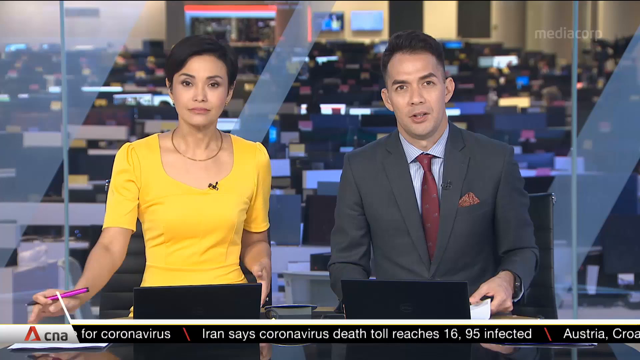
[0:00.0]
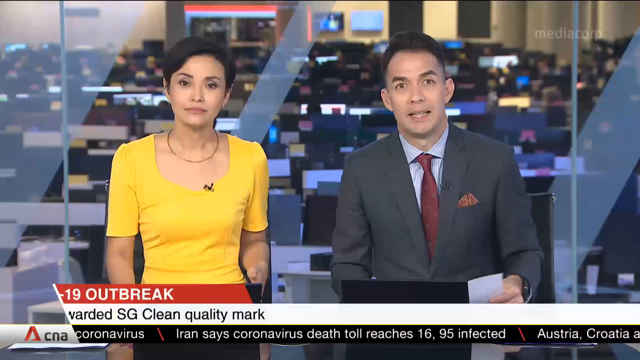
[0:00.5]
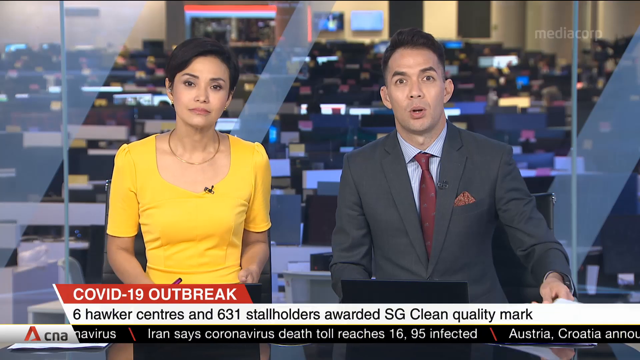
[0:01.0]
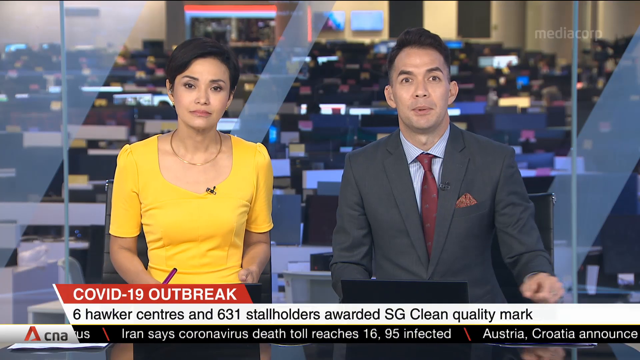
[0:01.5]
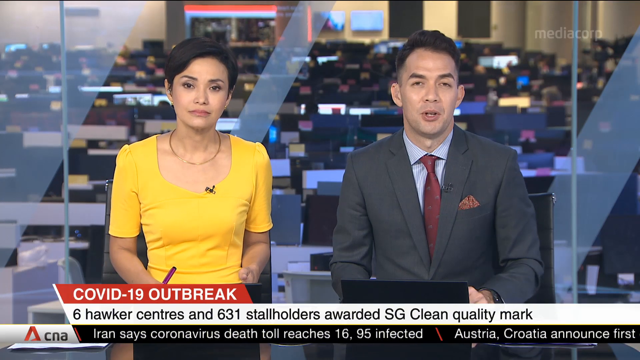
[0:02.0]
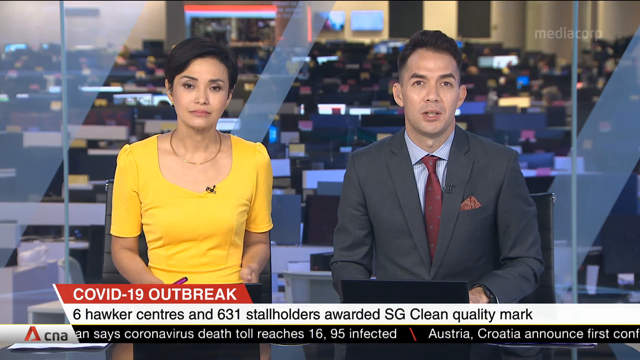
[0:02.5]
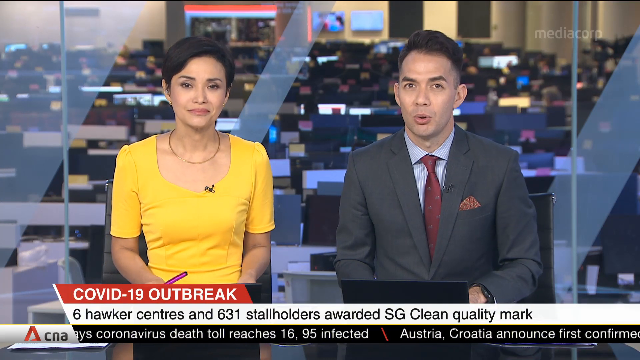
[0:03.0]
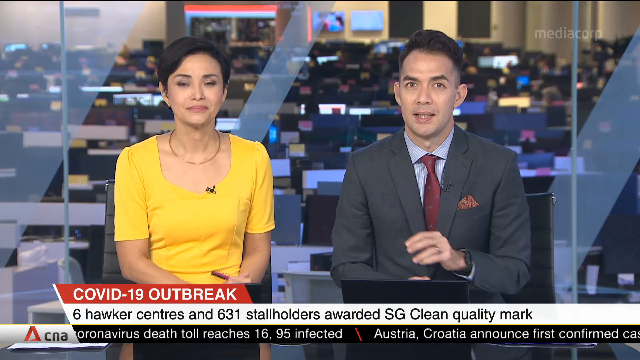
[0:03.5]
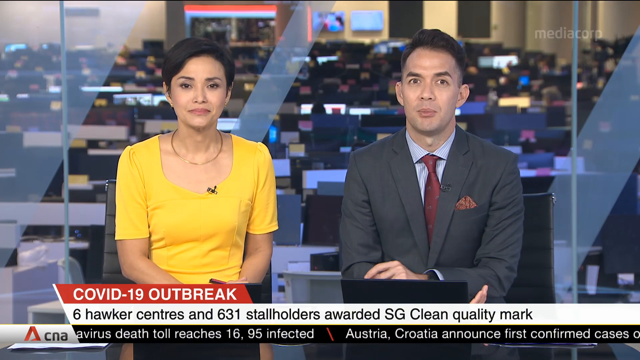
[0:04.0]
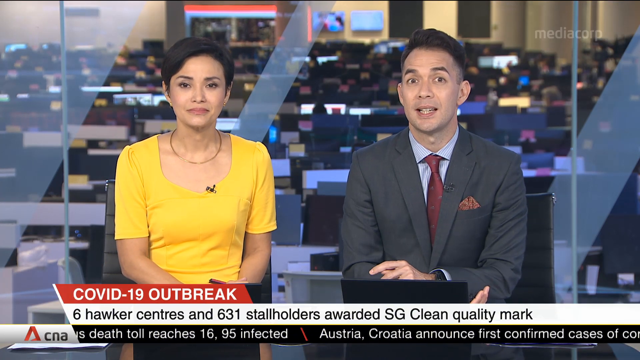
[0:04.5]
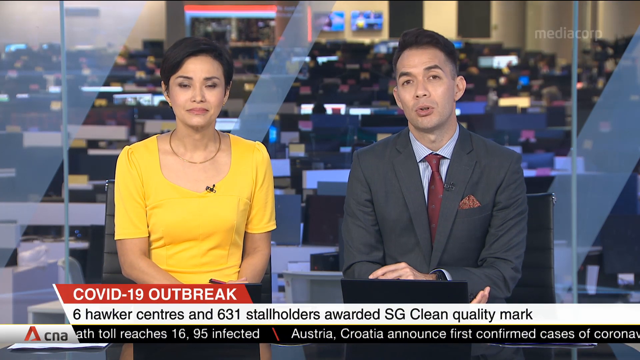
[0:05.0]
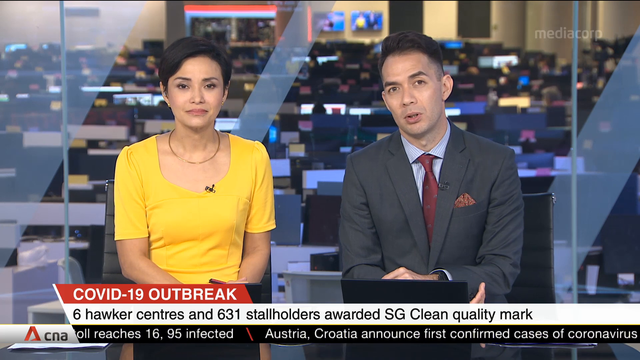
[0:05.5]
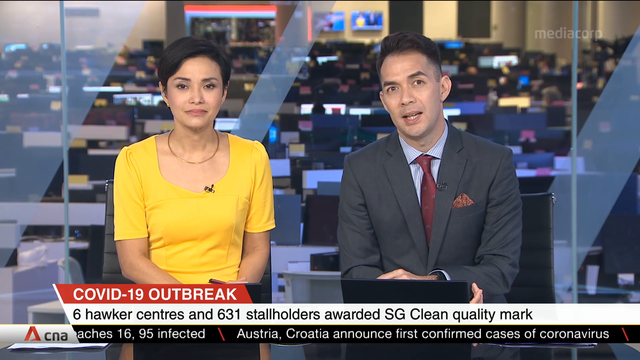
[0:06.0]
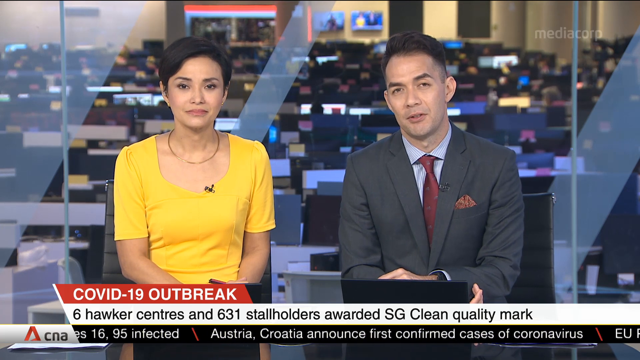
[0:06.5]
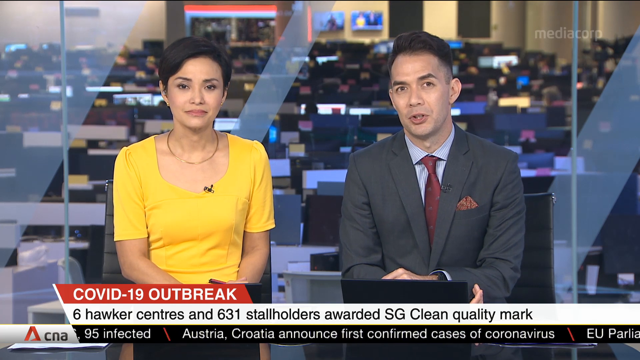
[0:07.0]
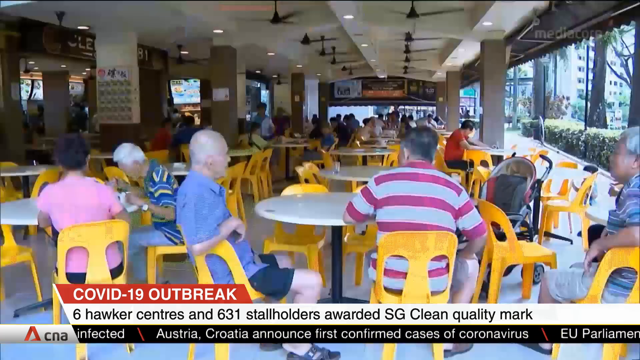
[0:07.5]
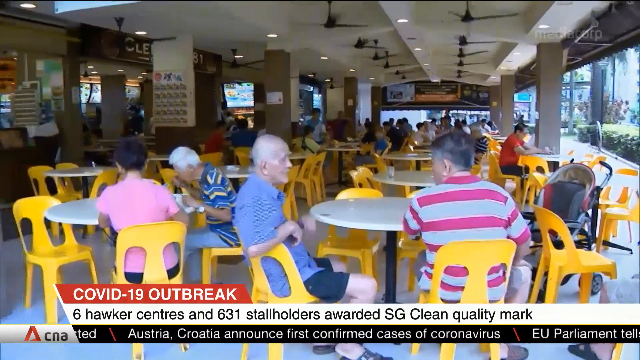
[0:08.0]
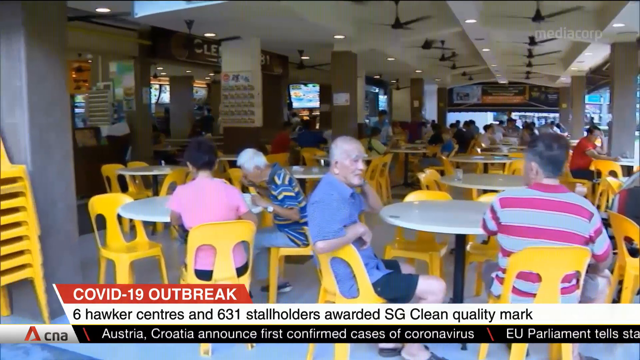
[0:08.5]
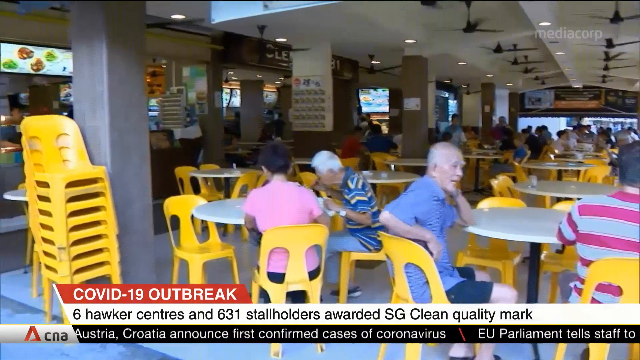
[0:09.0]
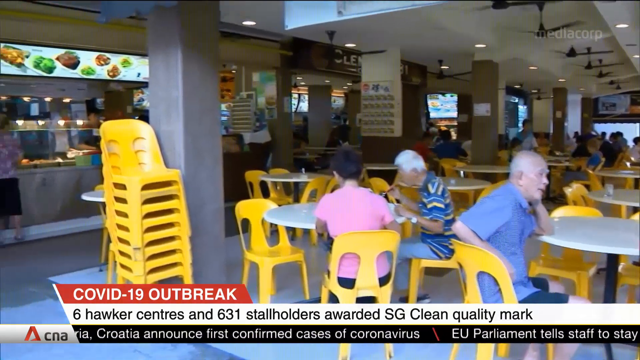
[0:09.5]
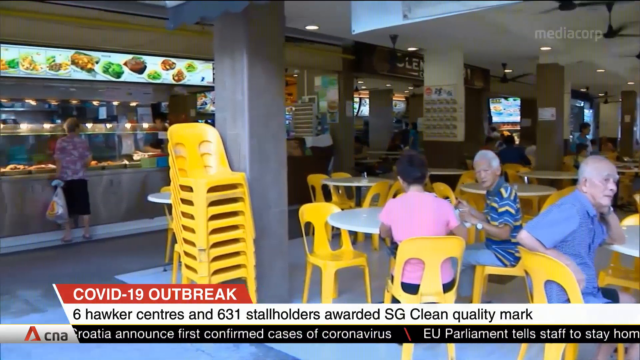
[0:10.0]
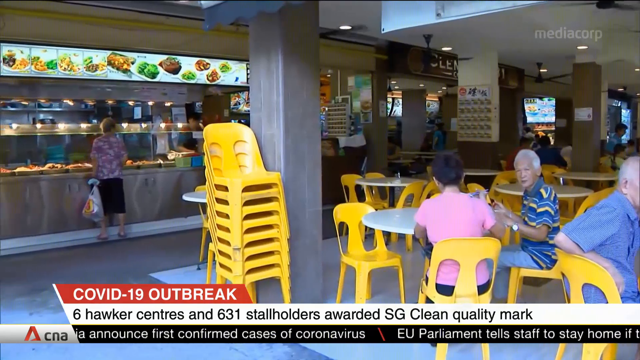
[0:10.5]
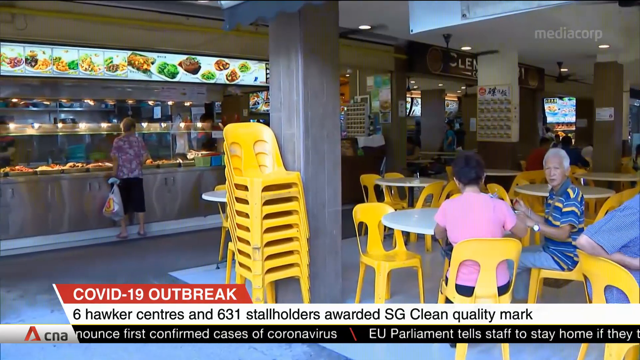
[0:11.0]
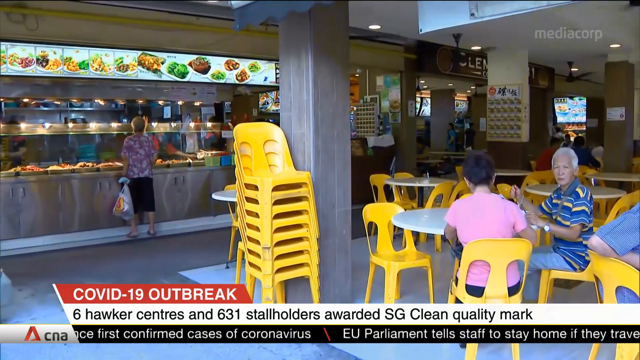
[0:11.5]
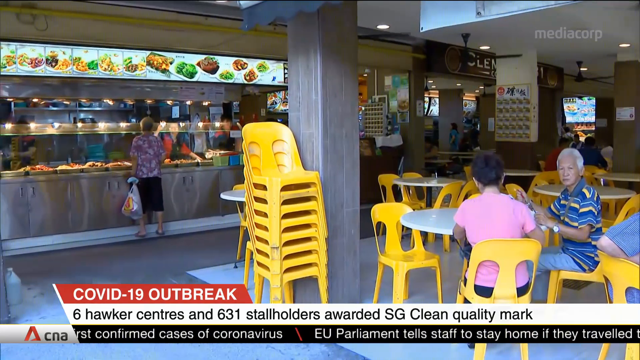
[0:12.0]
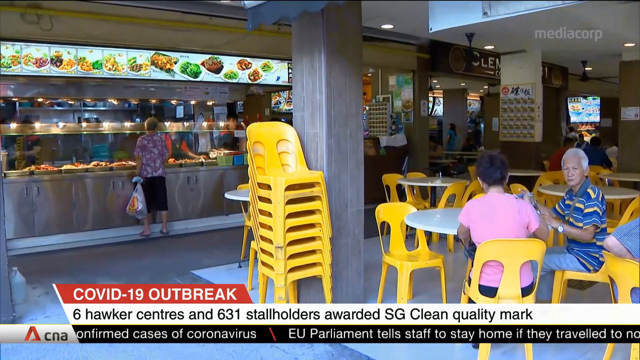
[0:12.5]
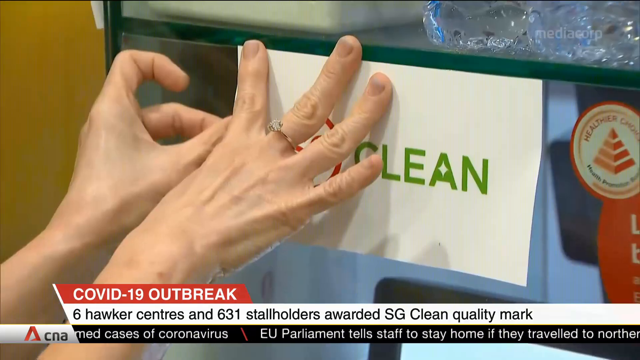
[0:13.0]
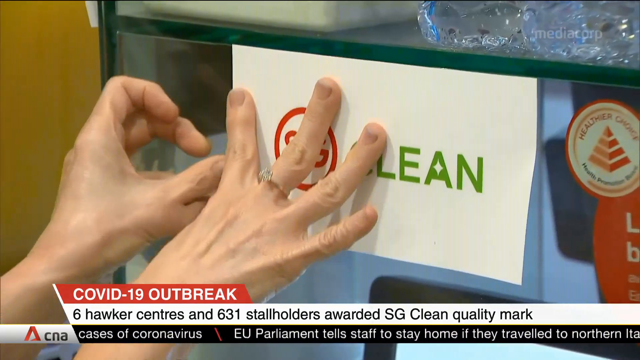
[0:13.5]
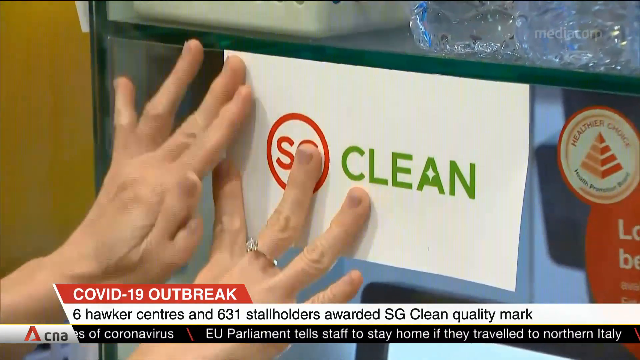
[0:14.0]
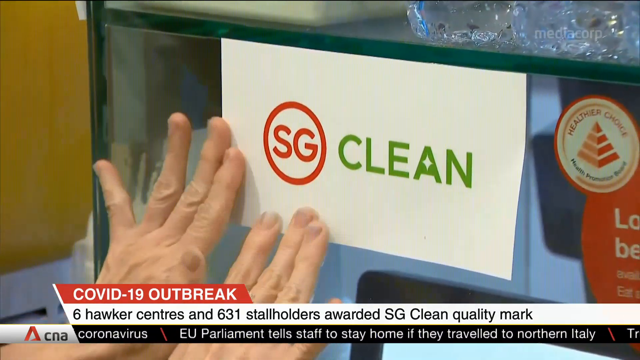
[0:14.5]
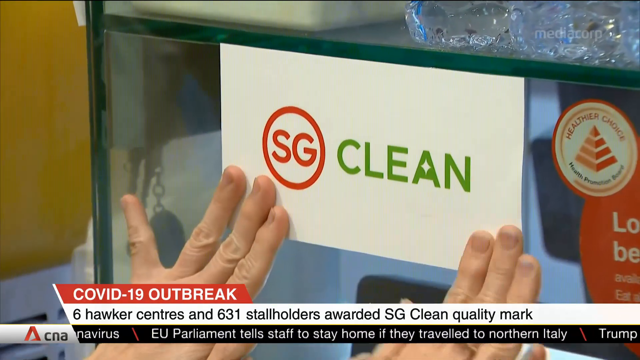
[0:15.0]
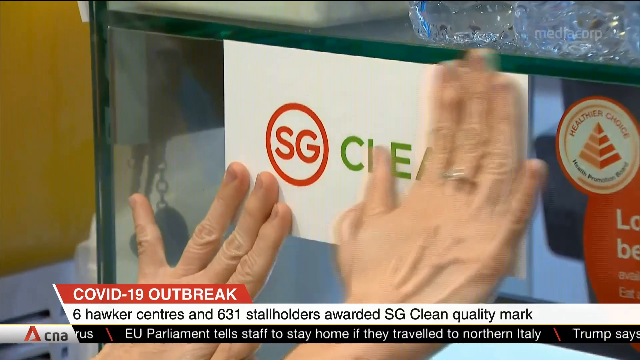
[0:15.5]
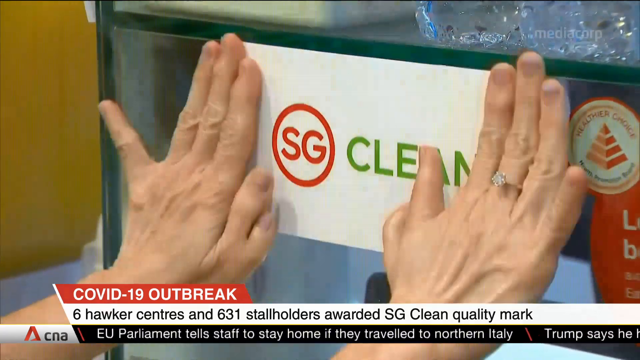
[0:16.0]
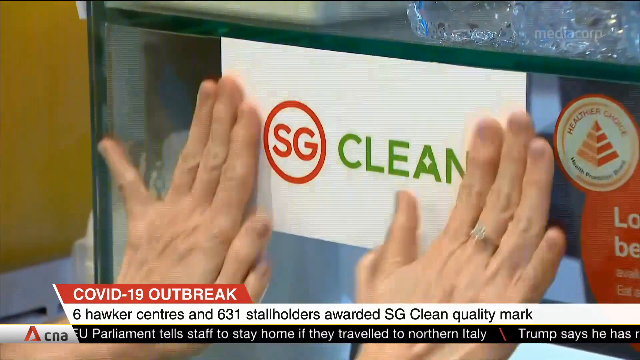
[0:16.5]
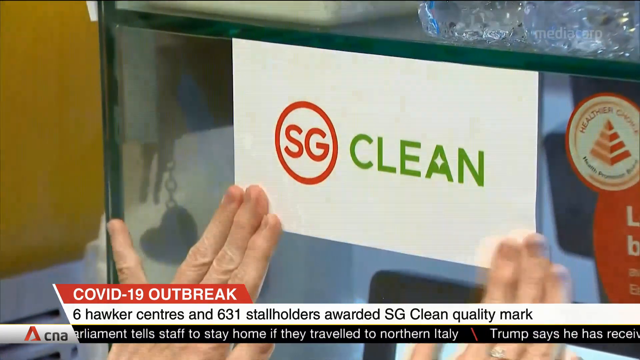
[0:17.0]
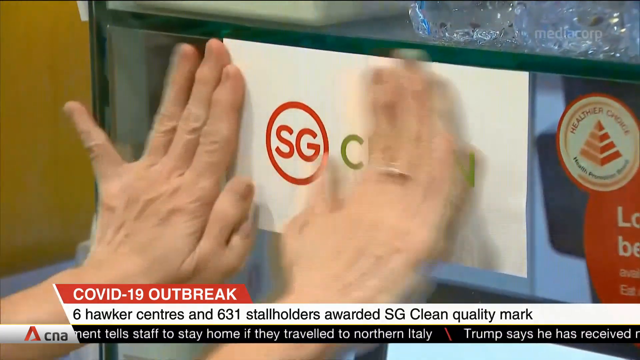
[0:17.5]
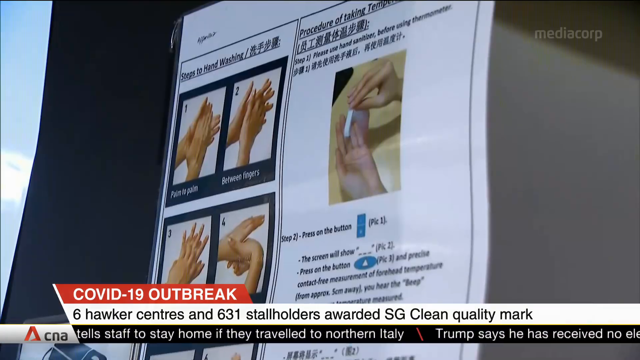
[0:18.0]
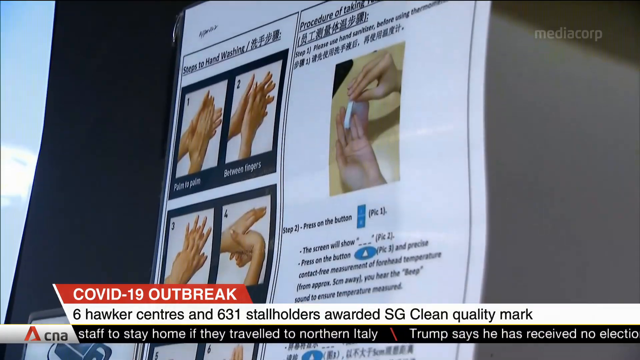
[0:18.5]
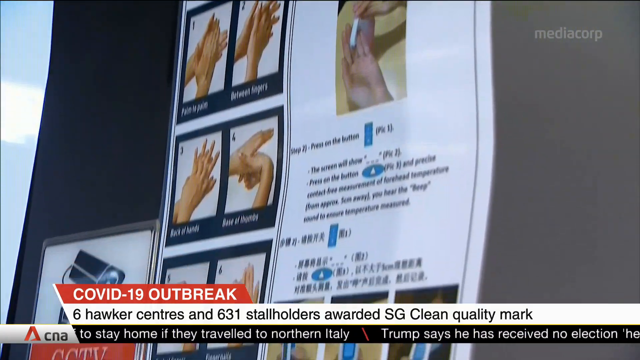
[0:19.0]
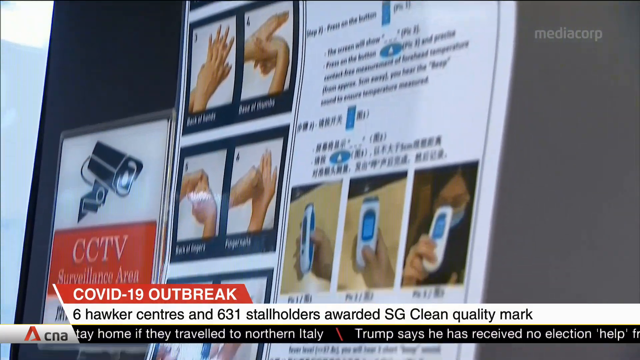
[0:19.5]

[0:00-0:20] Two news anchors are at a desk, talking. The one on the left is a woman in a yellow dress and the one on the right is a man, who is speaking. Both have their arms resting on the desk in front of them. The video then shows people eating at a restaurant. Although there is a ceiling, it may be an open-air restaurant, since there are many fans on the ceiling and the chairs look plastic, as if weather-resistant. Words at the bottom of the screen say "COVID-19 outbreak". The camera pans over to an area where food is picked up. Someone puts a sign on a glass case that says "SG" within a red circle followed by the word "CLEAN", pressing down on it with the fingers of both hands as if to make it stay on the glass. More papers are then shown, apparently laminated posters stuck on glass.